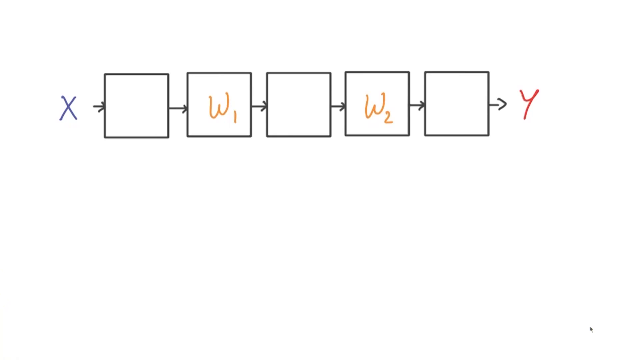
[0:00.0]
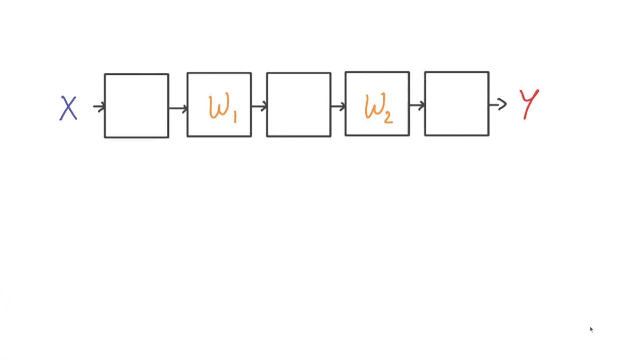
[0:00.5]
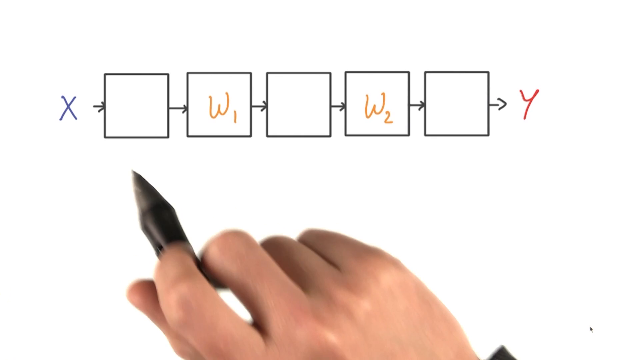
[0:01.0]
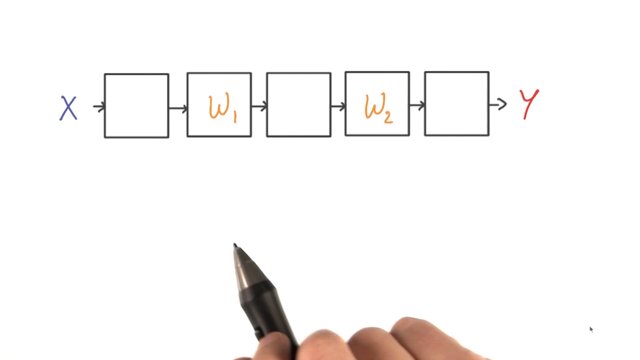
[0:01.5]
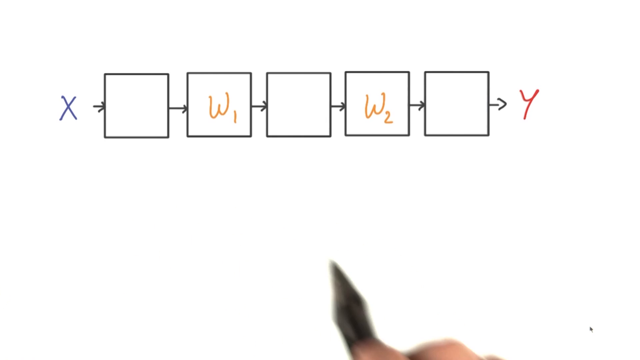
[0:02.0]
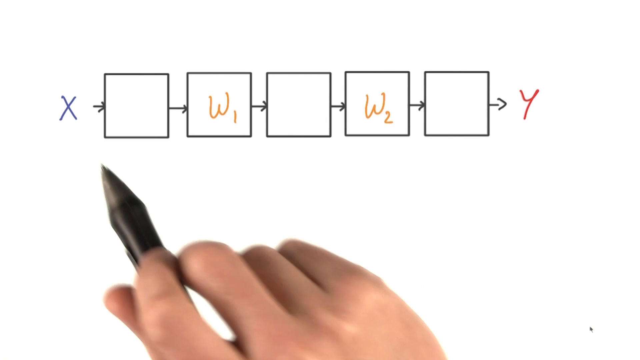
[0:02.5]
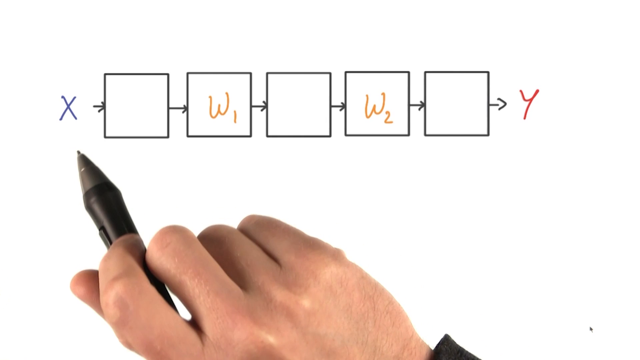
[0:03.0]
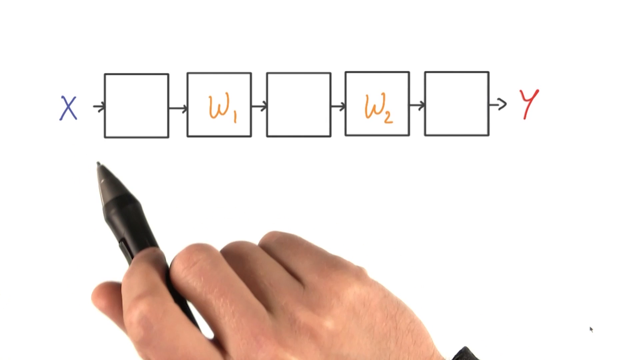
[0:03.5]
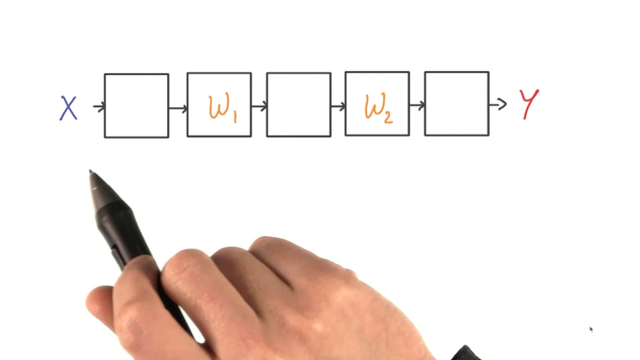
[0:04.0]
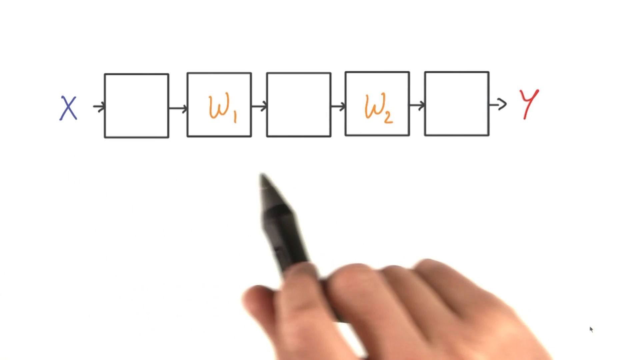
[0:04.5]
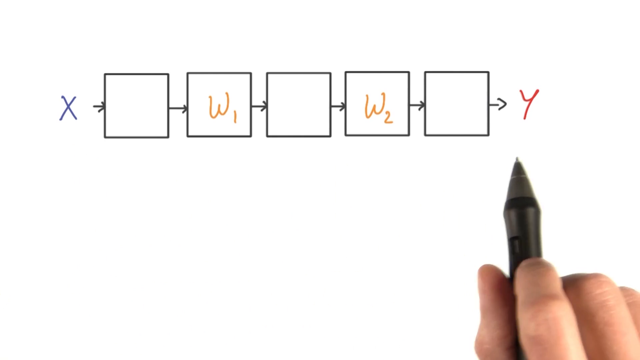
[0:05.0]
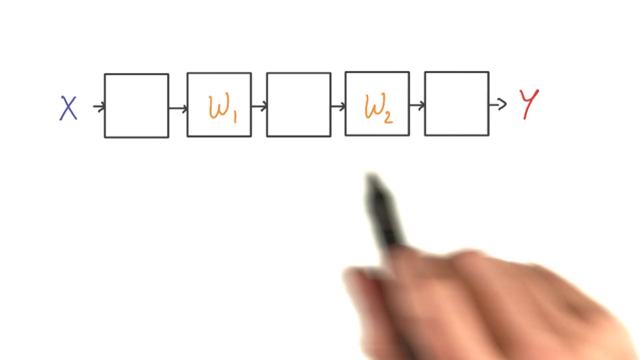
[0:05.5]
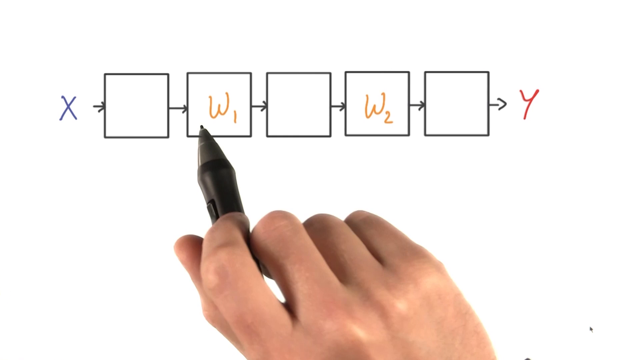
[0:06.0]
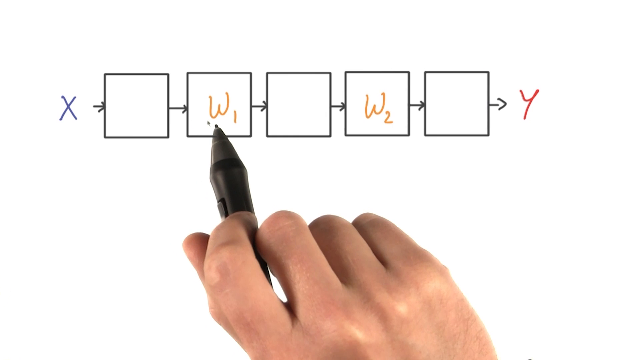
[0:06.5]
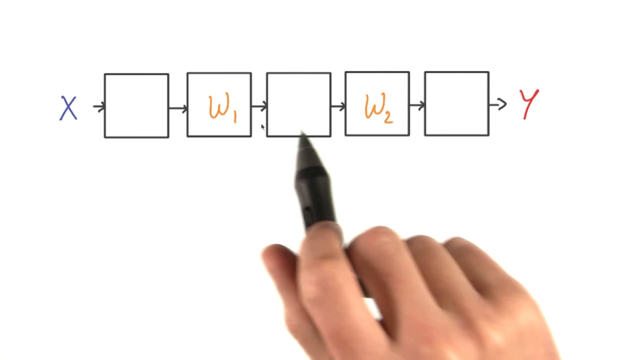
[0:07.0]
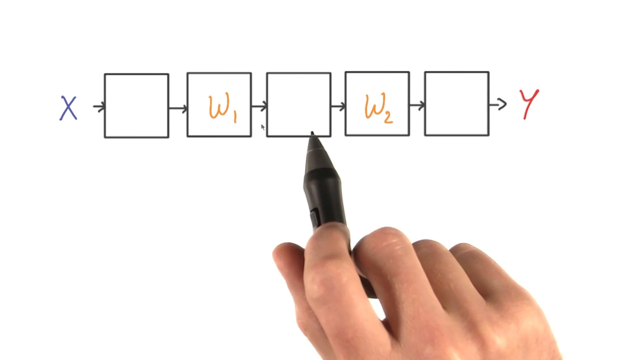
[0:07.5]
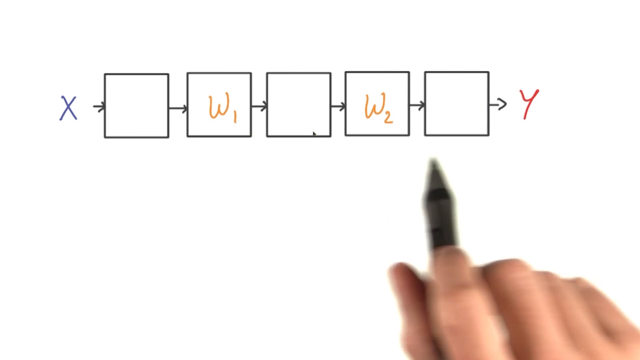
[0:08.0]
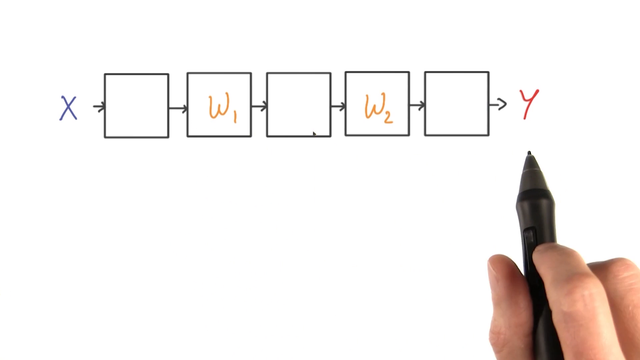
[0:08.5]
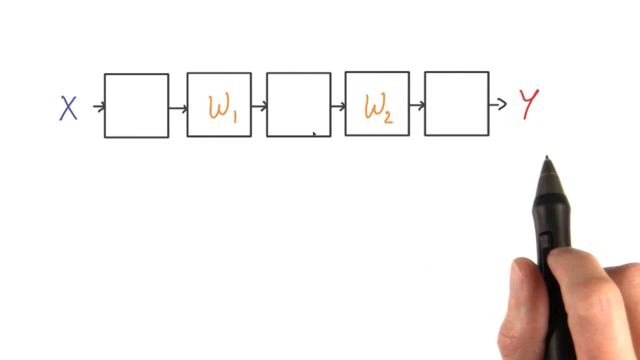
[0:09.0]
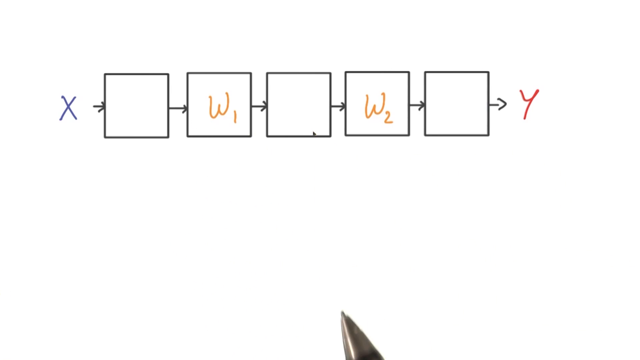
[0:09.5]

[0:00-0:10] A diagram that looks like a shift register is drawn on the screen. On the left side is an X in blue, probably the input, and on the right side is a Y in red, presumably the output. Between them are five squares, each sequential to the next, connected by lines and arrows that point from one to the other, presumably showing the order in which information travels from the input to the output. In yellow, the second and fourth squares contain the letter W with a 1 and a 2 at the lower corner of the letter. The person behind the camera uses a pen to point out the general picture.